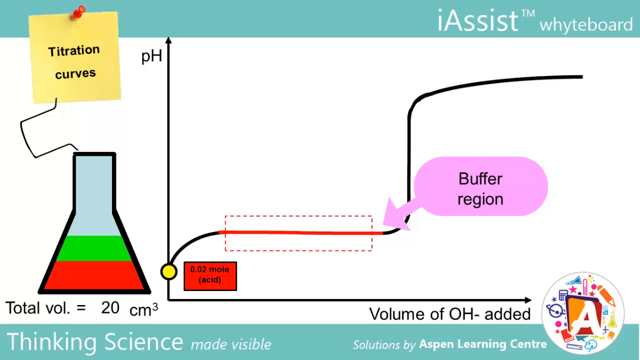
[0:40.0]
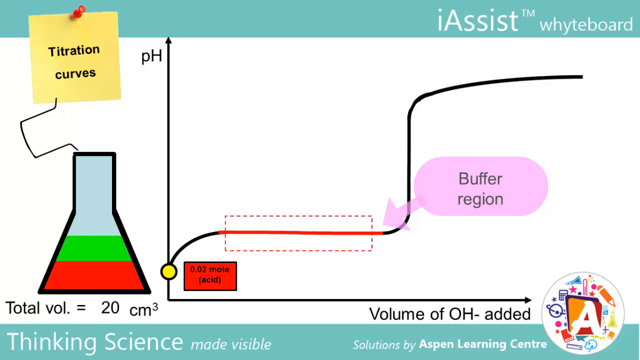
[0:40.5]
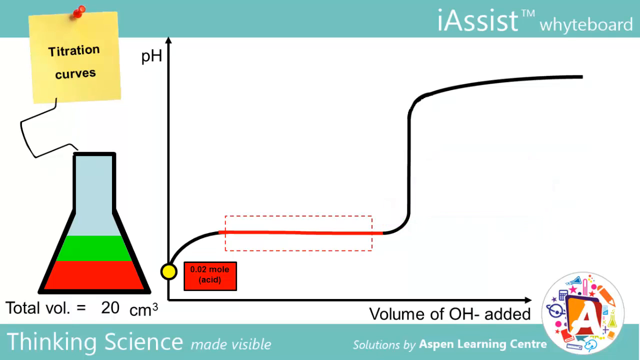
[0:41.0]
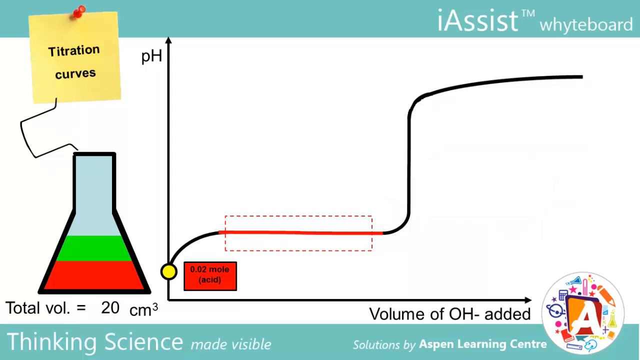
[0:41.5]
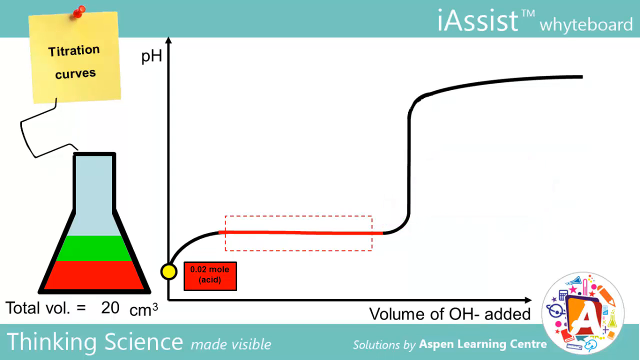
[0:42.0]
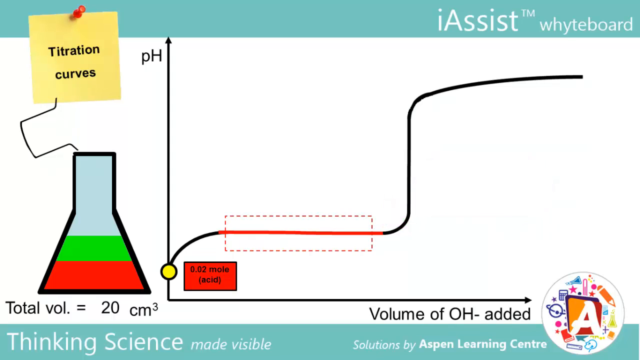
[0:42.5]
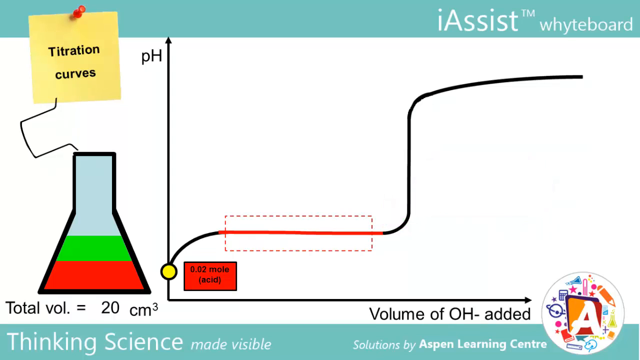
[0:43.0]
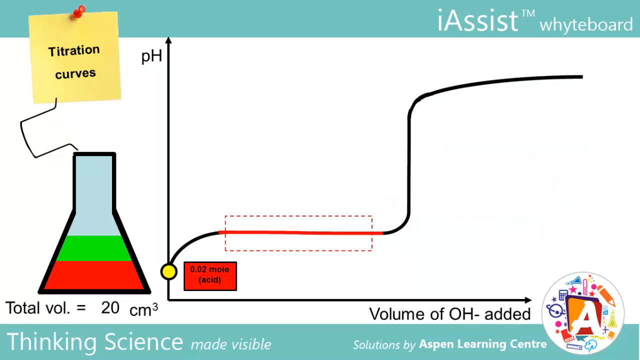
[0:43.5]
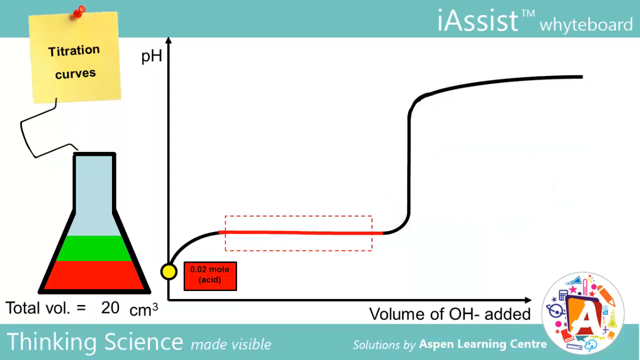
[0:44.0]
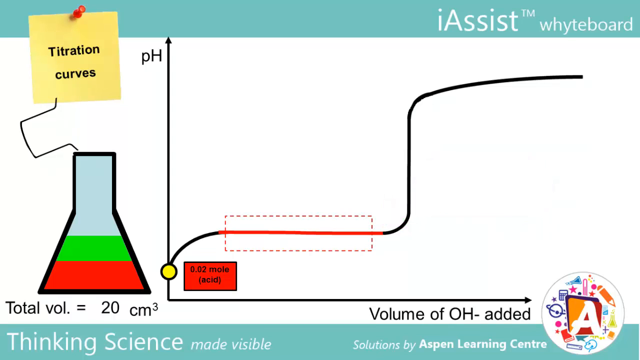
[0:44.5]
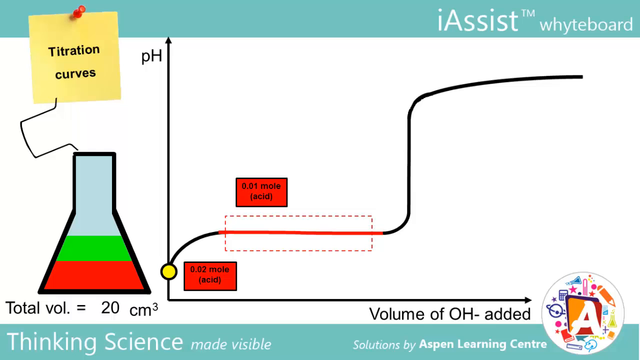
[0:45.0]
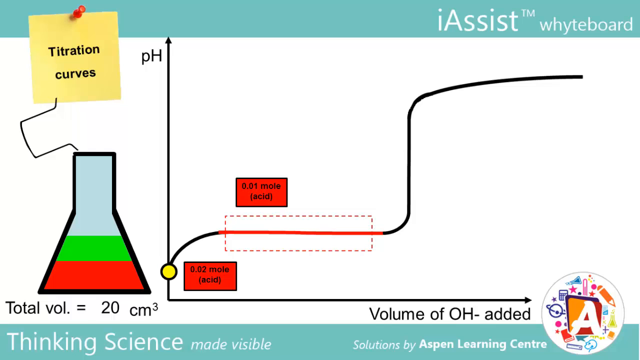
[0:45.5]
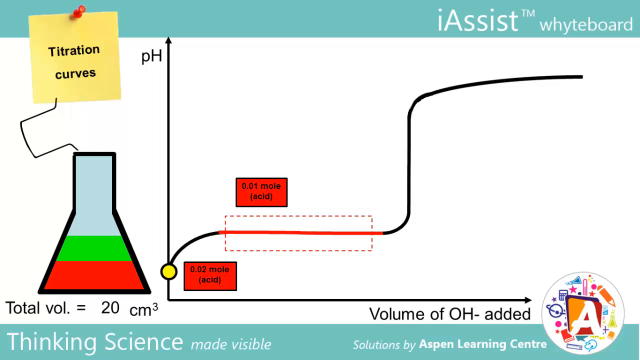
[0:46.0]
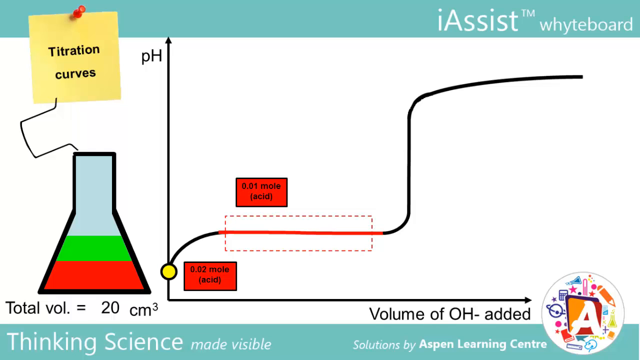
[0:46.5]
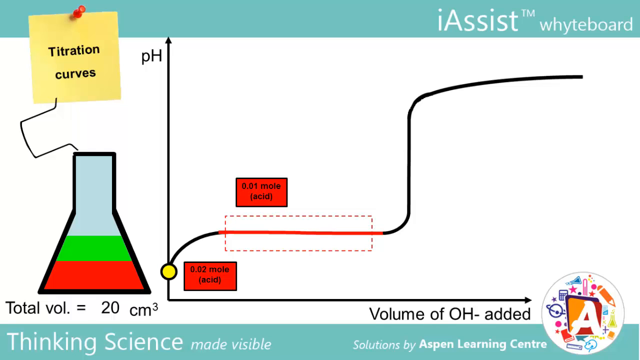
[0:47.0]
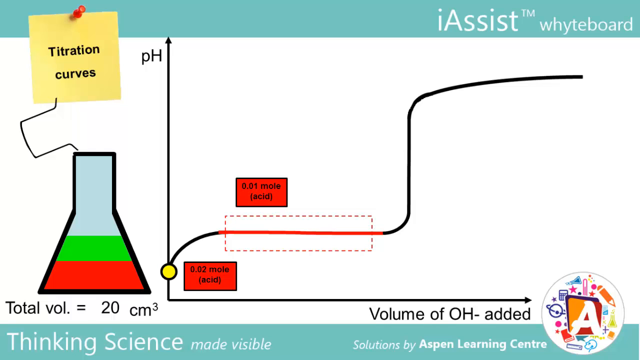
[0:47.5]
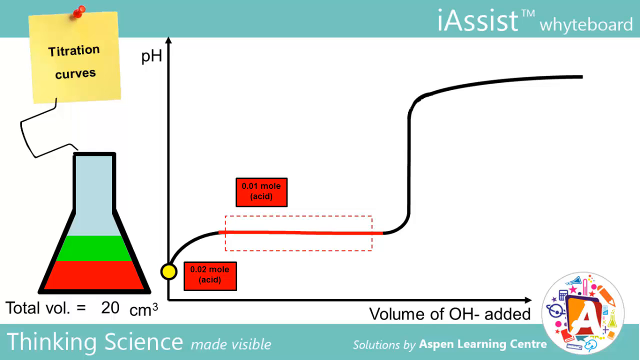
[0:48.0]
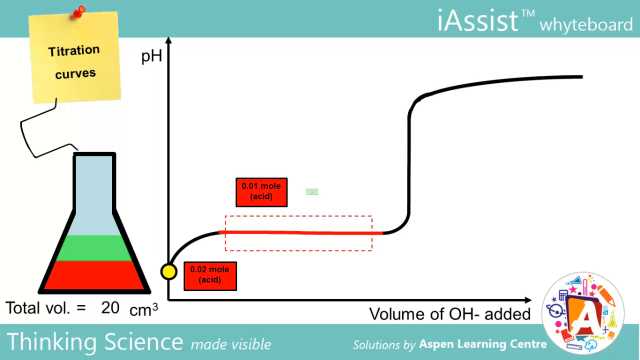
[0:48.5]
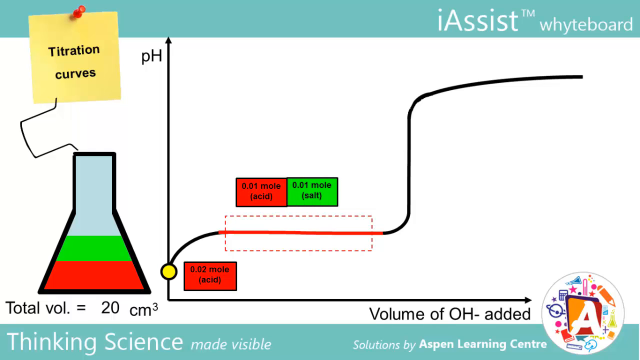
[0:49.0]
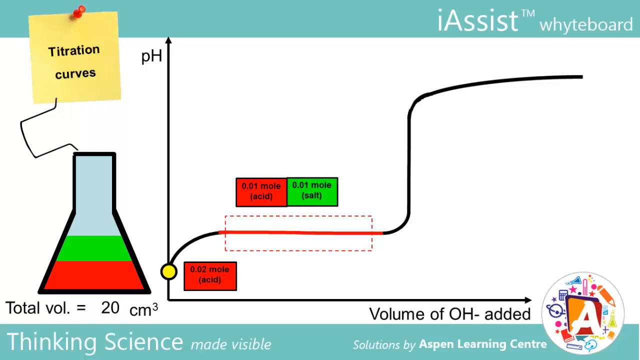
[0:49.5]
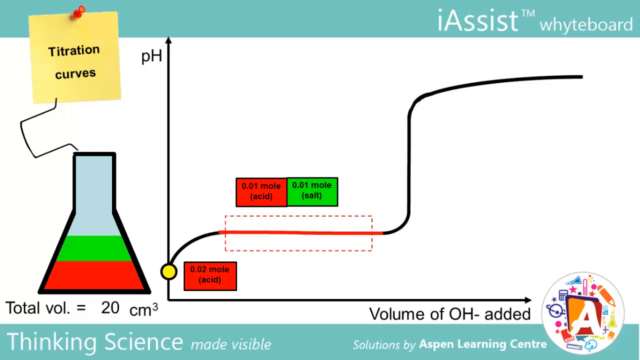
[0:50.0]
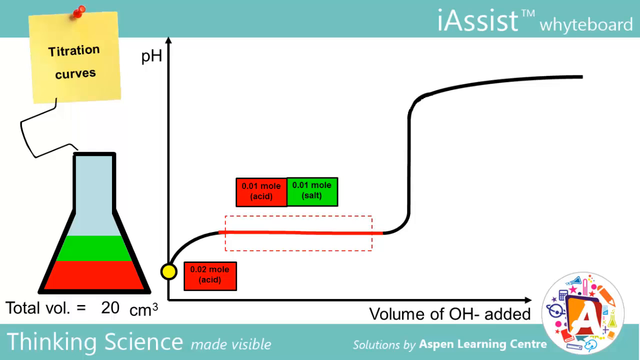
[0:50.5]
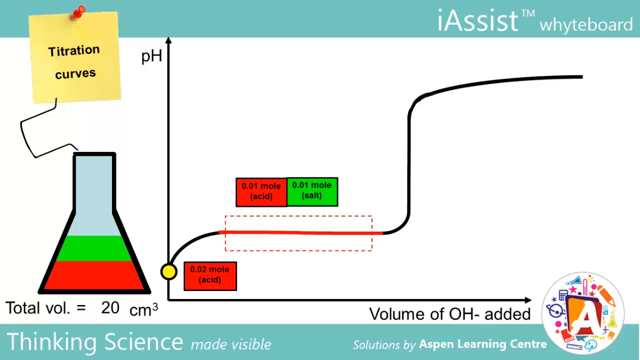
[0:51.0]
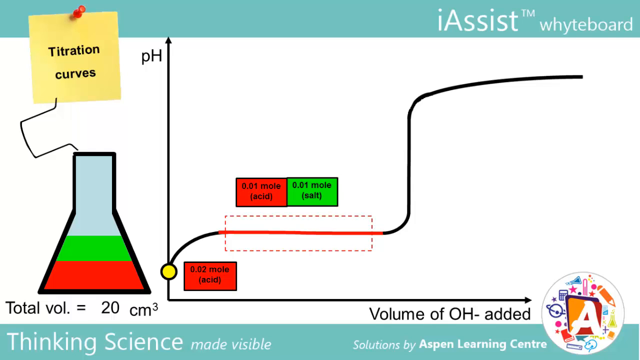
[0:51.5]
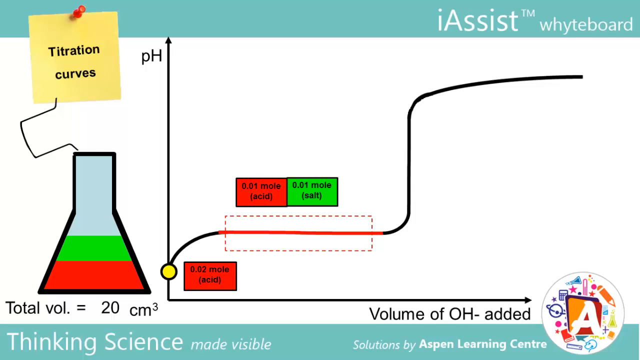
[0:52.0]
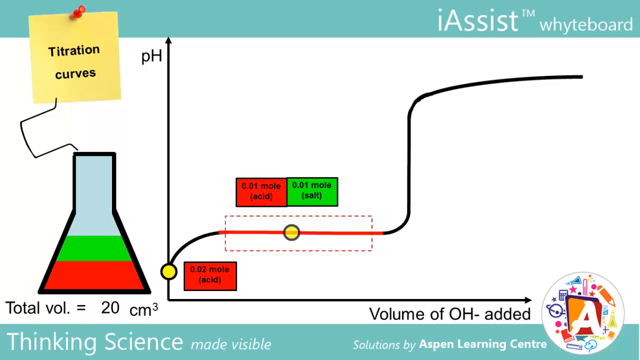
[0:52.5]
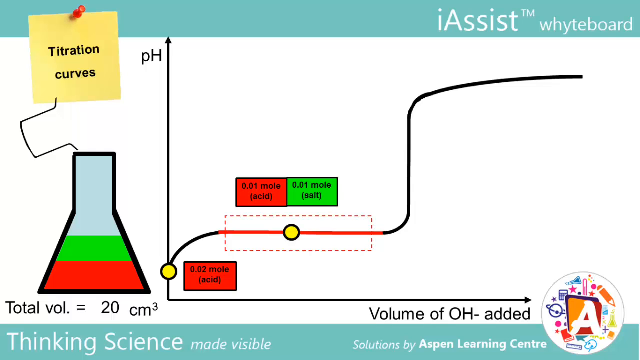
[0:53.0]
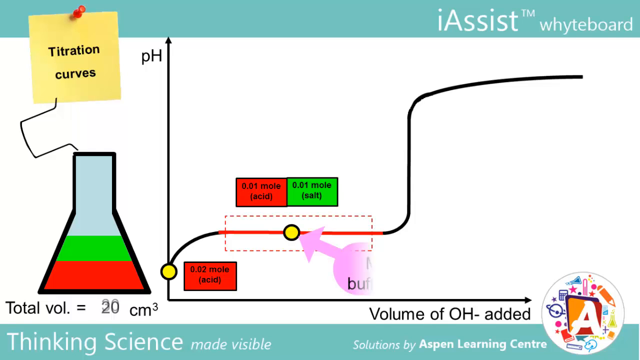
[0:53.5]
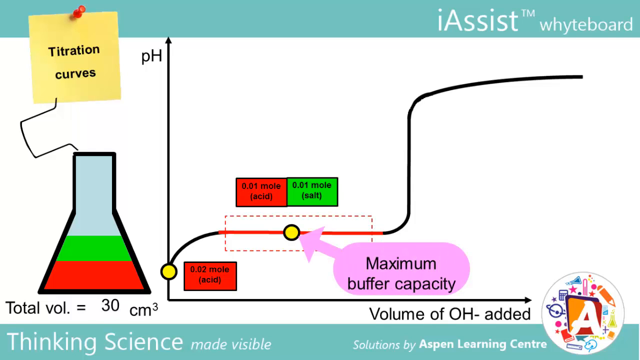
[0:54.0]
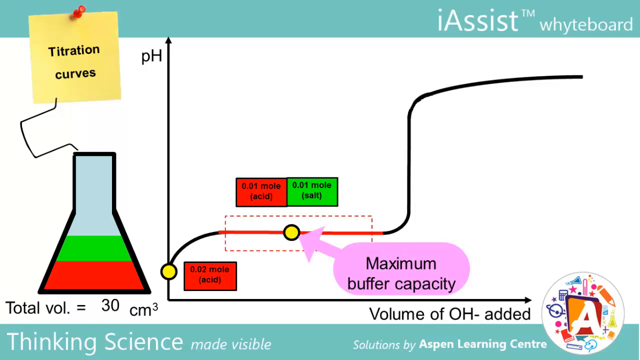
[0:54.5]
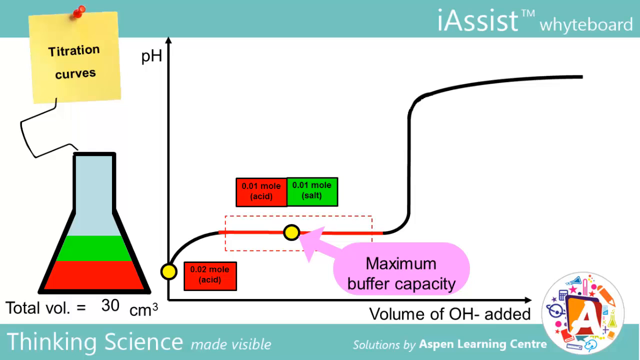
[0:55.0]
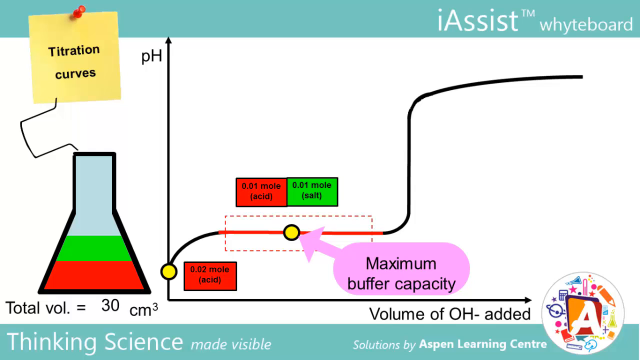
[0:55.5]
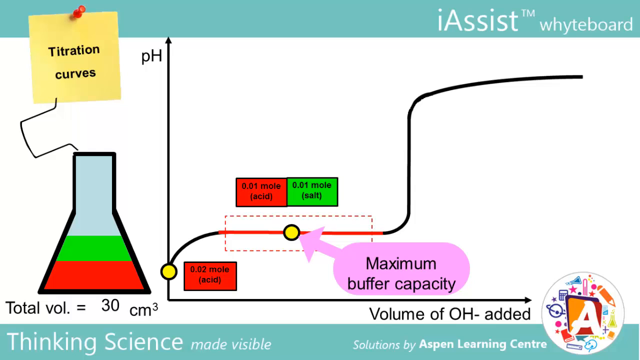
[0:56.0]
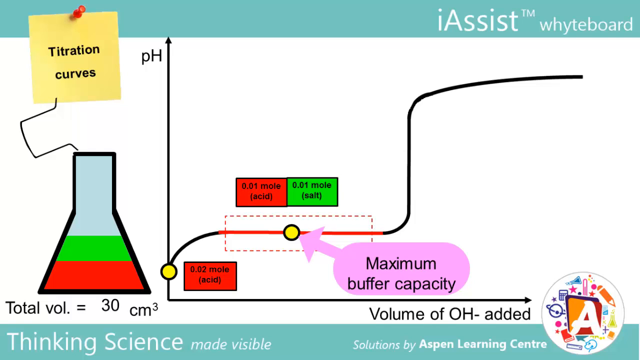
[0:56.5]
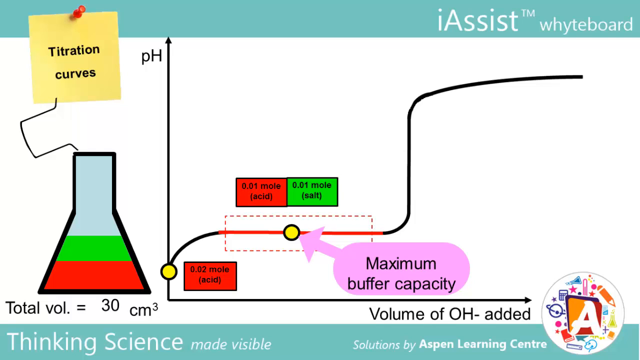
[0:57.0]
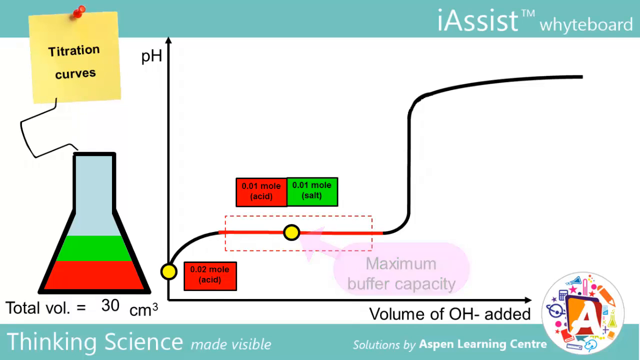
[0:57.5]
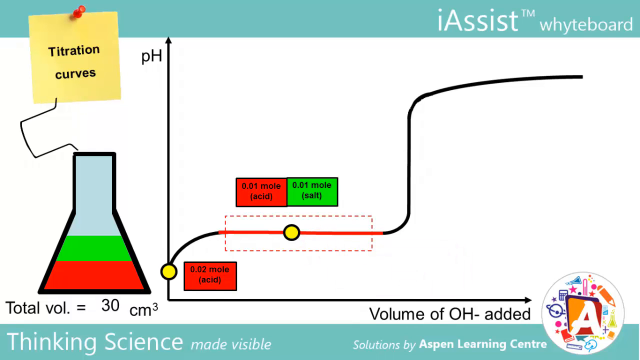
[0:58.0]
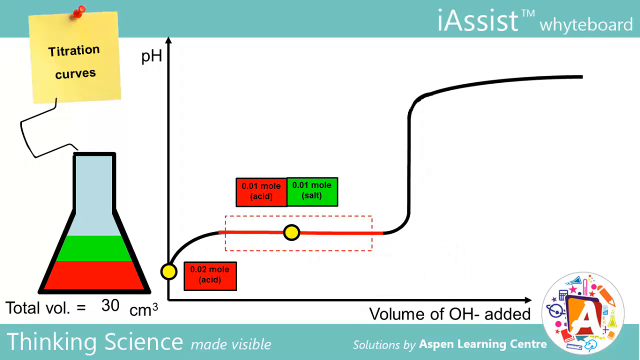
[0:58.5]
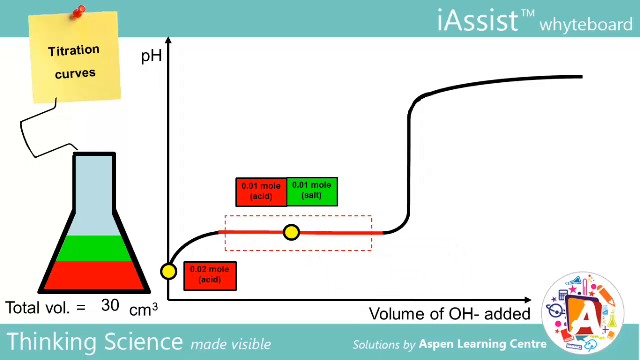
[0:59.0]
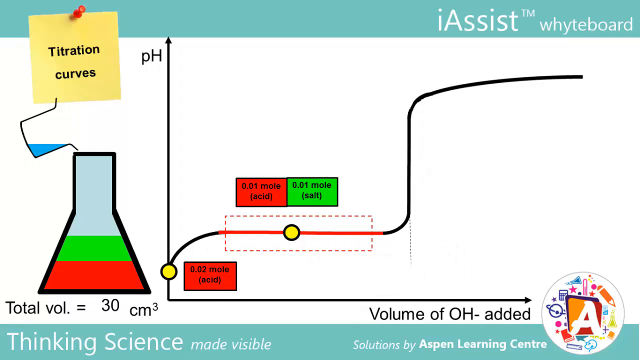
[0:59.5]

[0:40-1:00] At the center of the screen there is a graph with a black curve. A portion of the curve is highlighted in red, and this portion is further marked by a red rectangle drawn with a non-continuous line. Above this portion of the curve are two colored rectangles, red on the left and green on the right, each with black lines inside. A yellow circle with a black border then appears at the red section of the curve. There is also a small pink and brownish shape, inside which black inscriptions appear. A light blue banner occupies only the upper part of the screen, and on the left there is a yellow post-it with black writing inside.